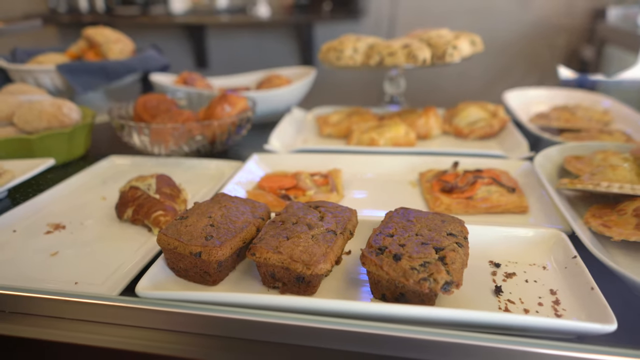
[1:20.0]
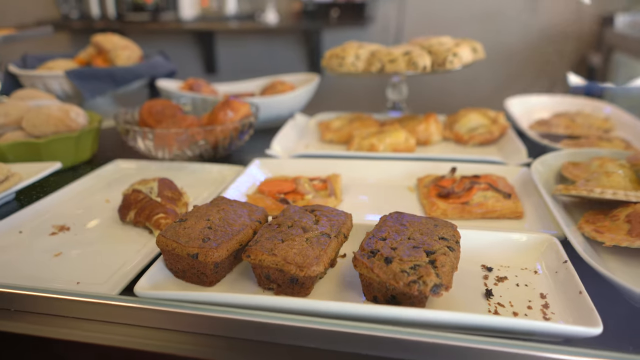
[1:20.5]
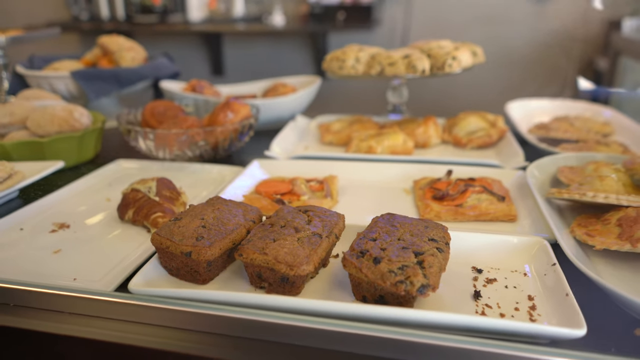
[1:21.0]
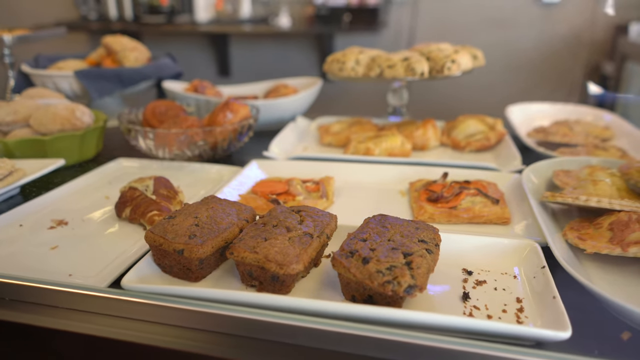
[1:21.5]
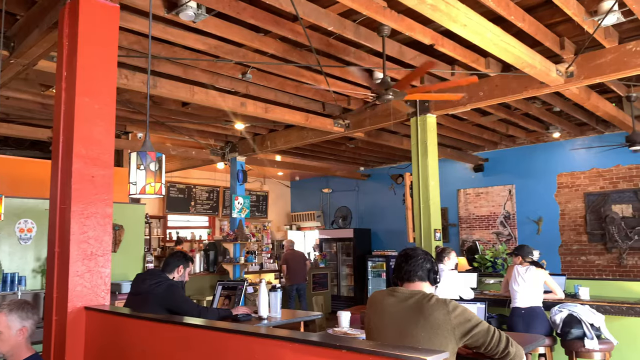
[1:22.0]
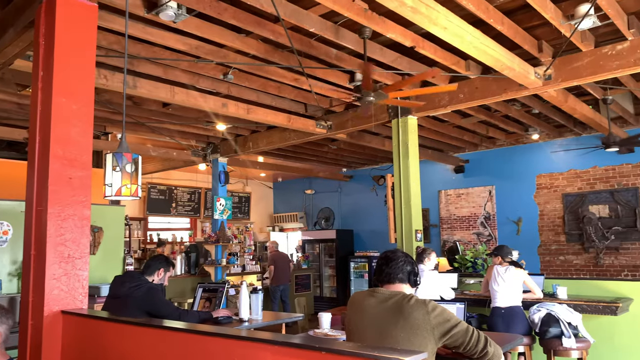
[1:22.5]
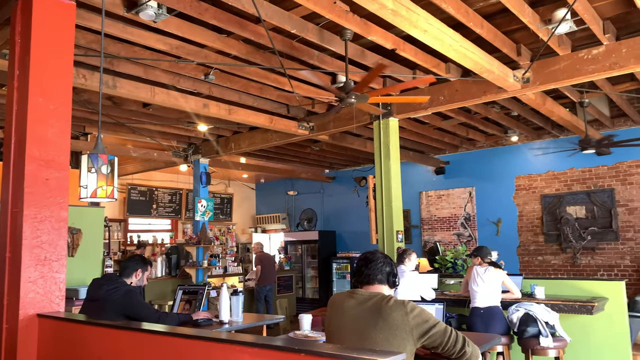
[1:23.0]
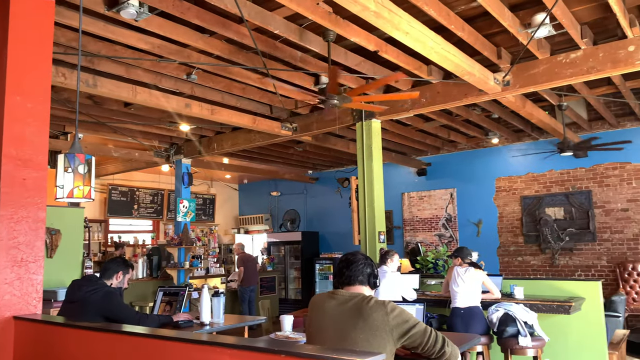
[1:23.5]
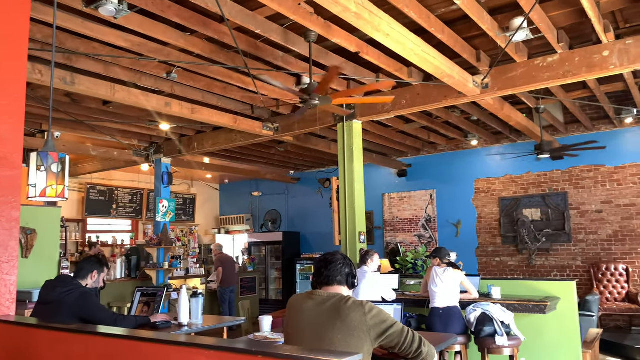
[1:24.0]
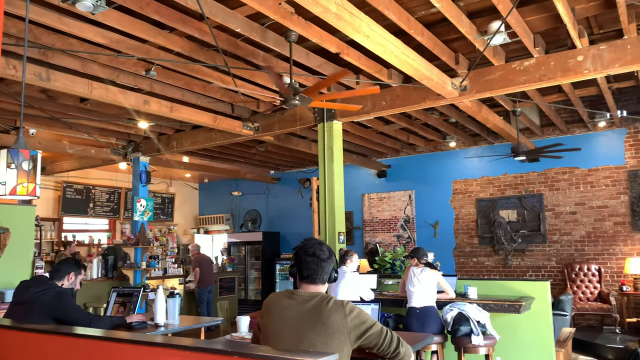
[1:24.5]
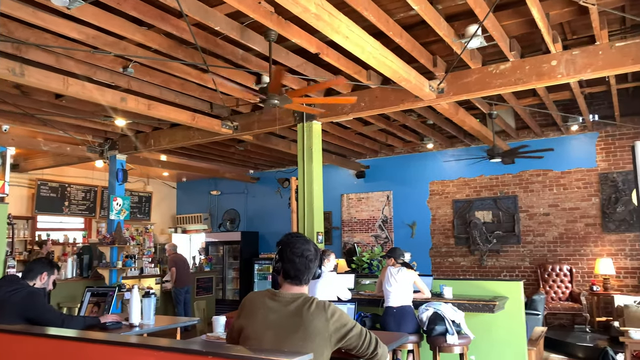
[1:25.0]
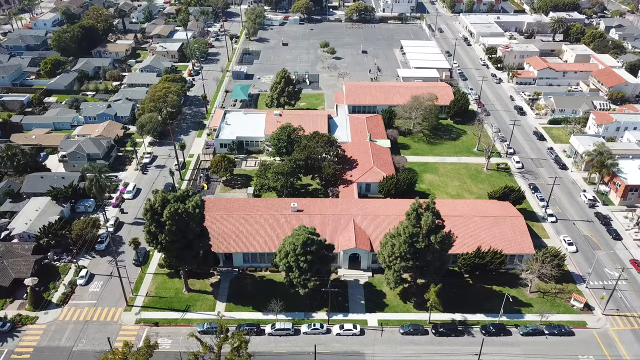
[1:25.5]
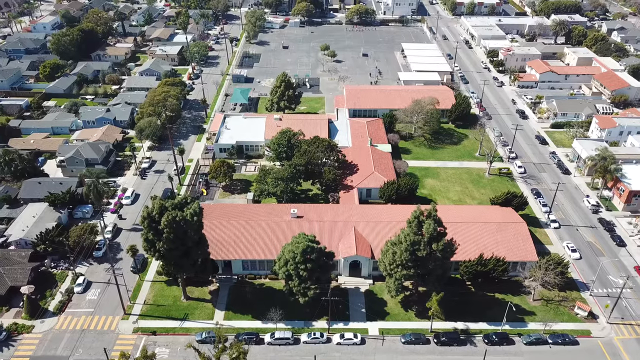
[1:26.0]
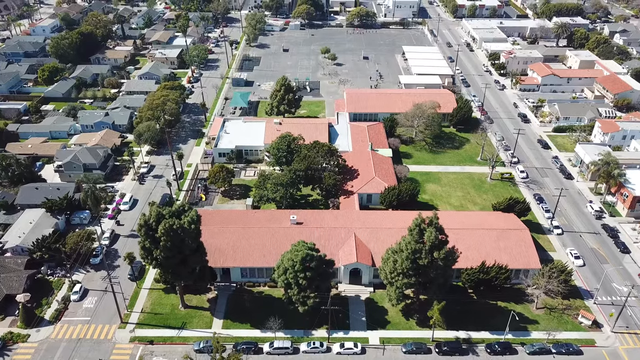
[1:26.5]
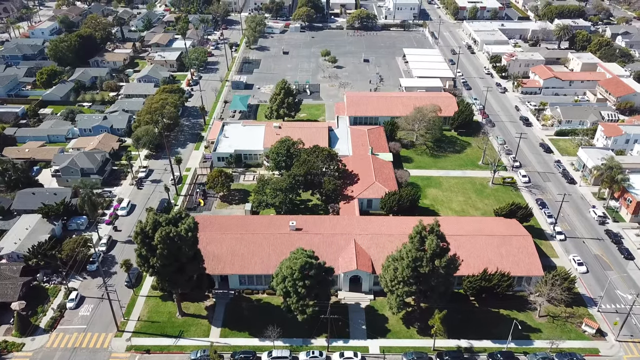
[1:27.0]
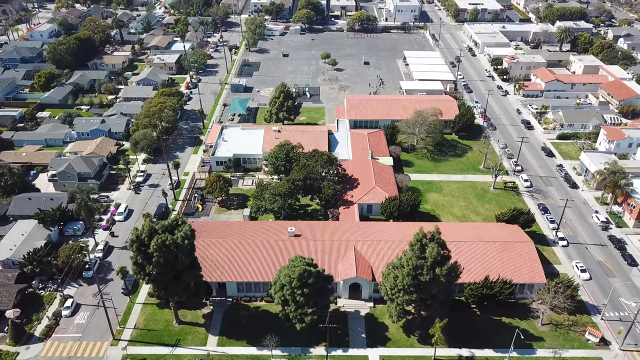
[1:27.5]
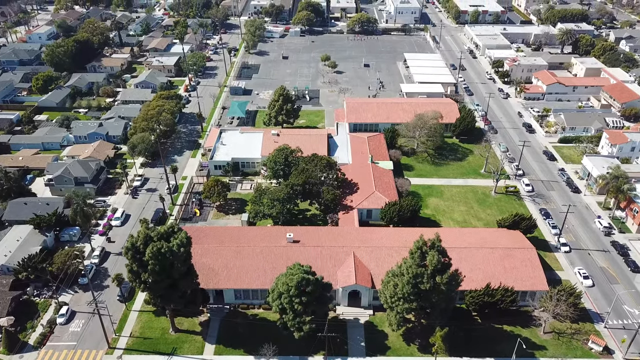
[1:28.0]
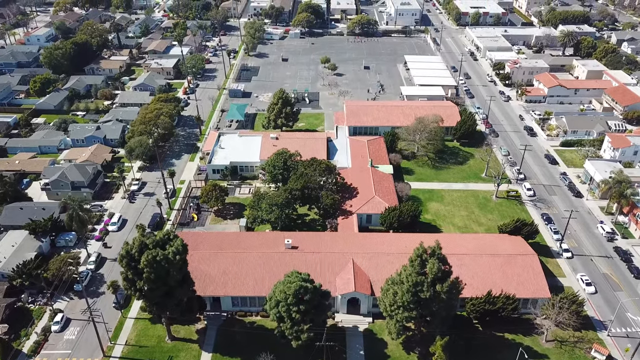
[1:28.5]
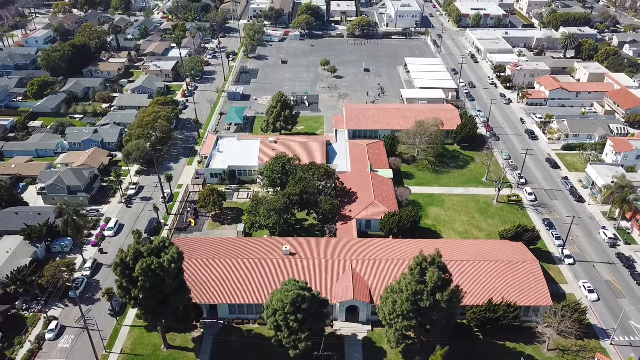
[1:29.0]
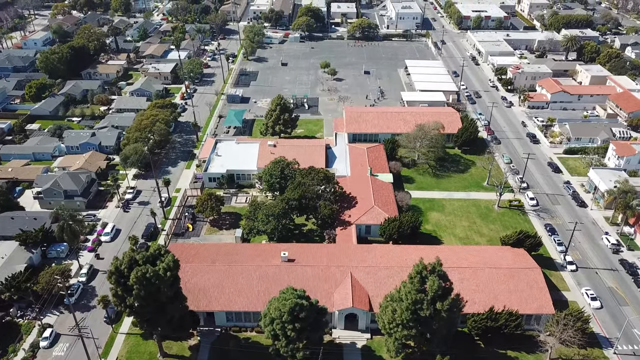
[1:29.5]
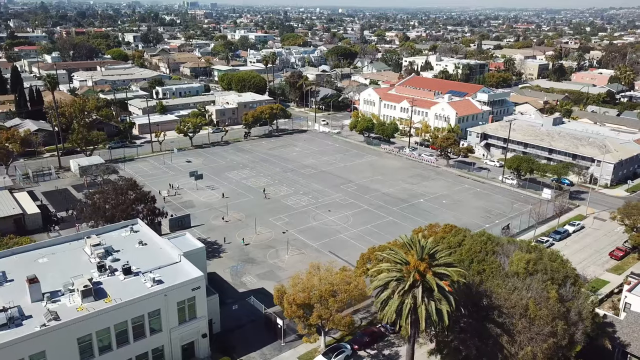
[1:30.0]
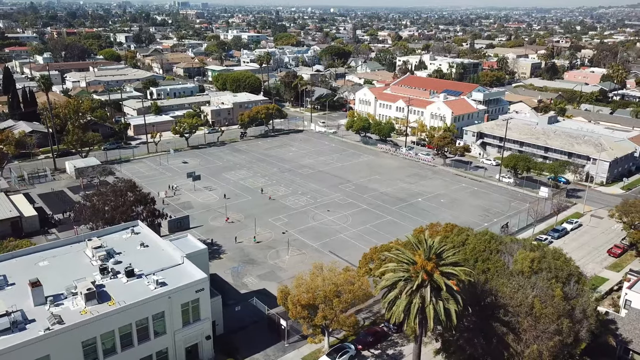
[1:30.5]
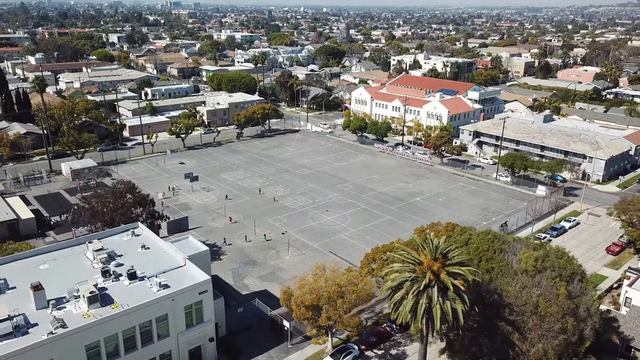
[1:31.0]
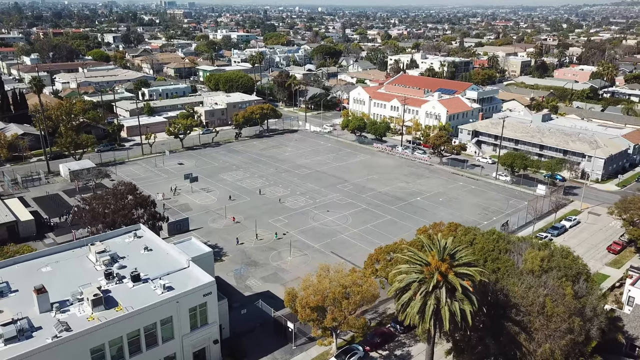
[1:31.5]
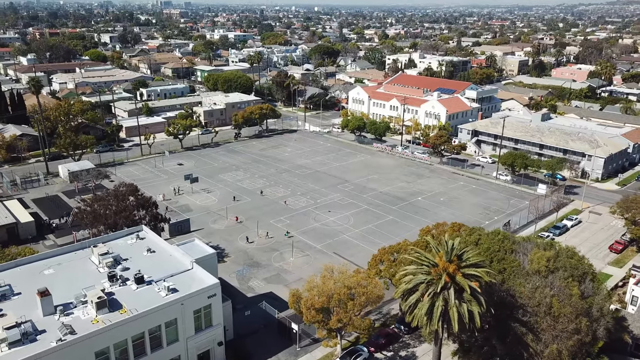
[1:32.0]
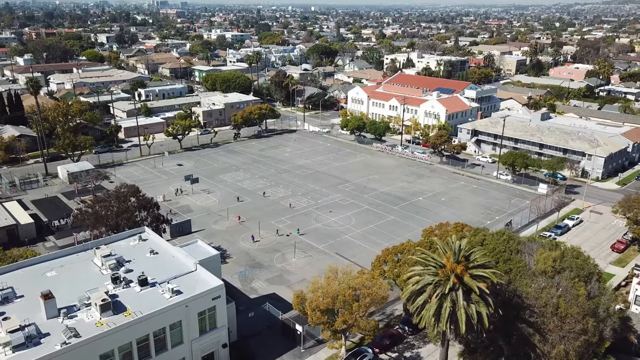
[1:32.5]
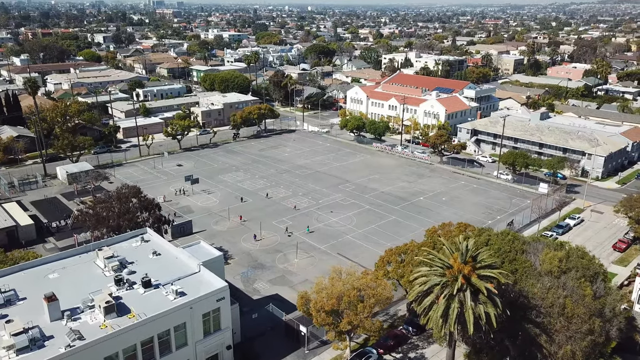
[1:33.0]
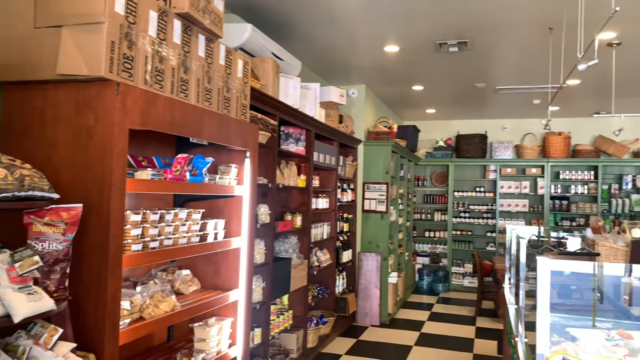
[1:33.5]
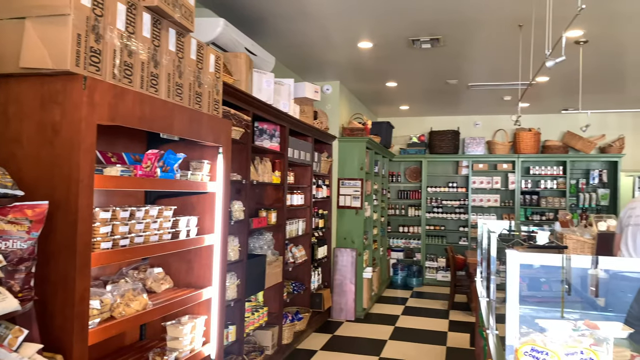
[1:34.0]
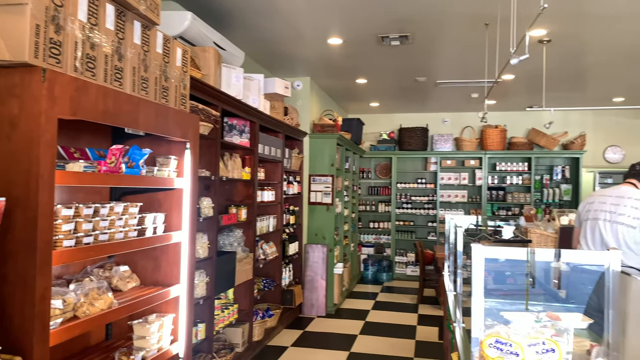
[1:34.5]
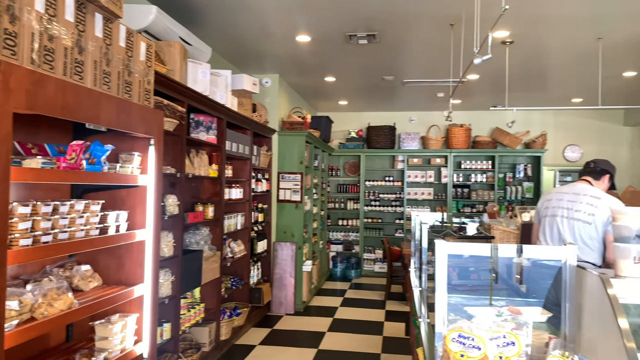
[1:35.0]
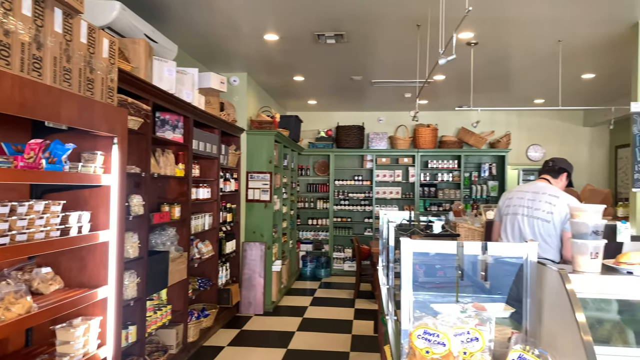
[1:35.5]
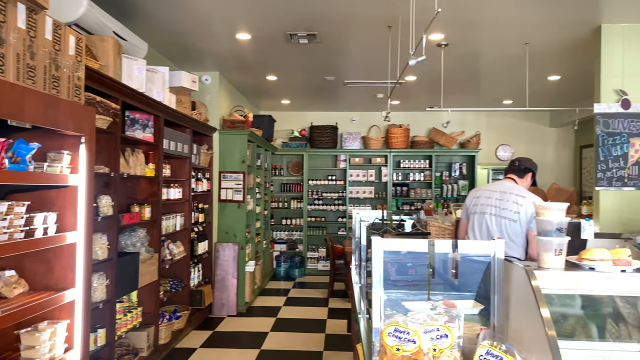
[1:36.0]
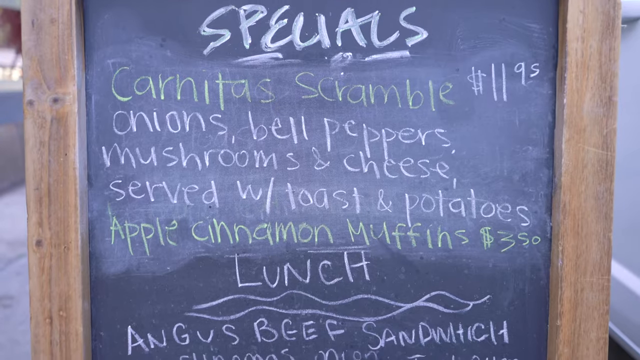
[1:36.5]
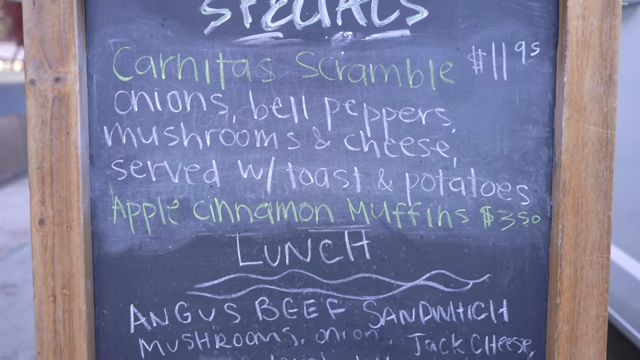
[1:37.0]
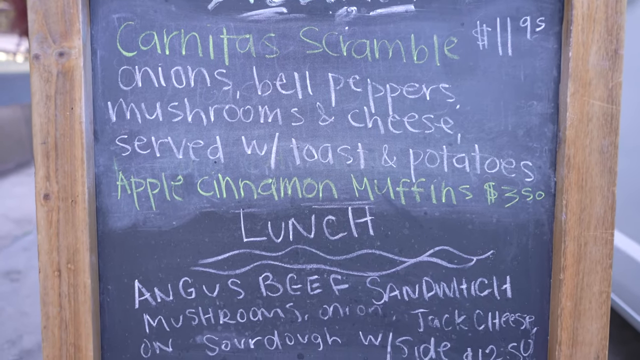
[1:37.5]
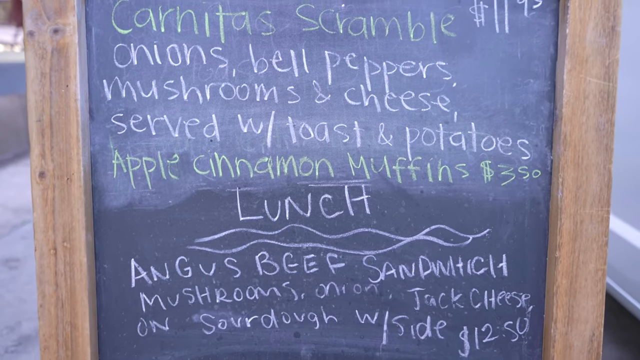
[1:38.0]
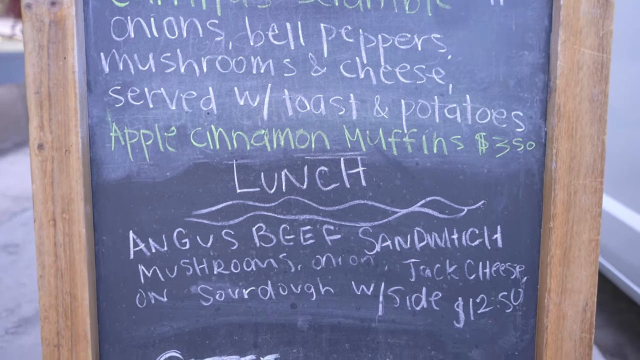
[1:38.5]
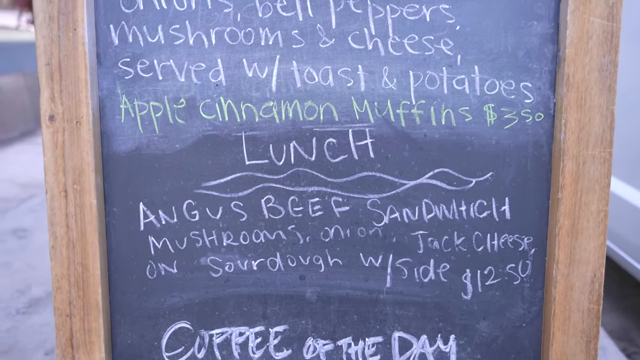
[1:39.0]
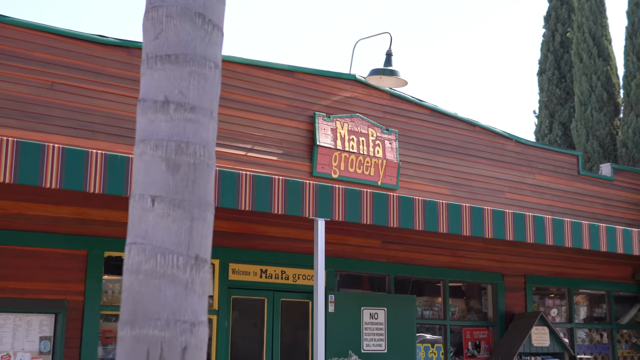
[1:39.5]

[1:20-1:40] A closer look shows food plated on a silver surface; some of the food is in glass, and some baked and fried products are on white plates, nicely decorated. A restaurant appears with moving air conditioners on top and a colorful wooden background in green and red. People, maybe a waitress, move around serving customers seated on wooden chairs at tables. The video then shifts to an aerial view of houses with a ground where kids can play, probably football. It then shifts to a supermarket with a man at the till and things pegged in cardboard that are red and wood. The lights are on the ceiling and most of the items can be seen clearly. A chalkboard shows what is being offered: "lunch", with onions, bell peppers and a beef sandwich mentioned. Outside the shop, "mainland" is written in maroon.